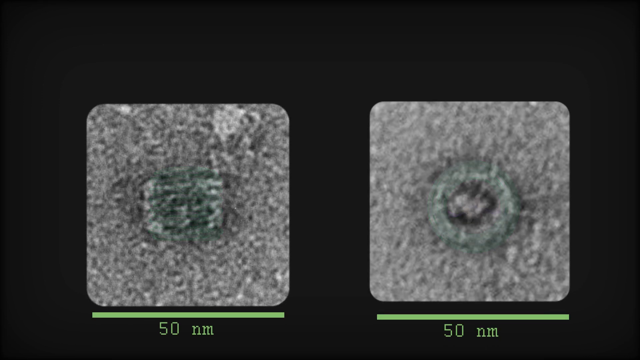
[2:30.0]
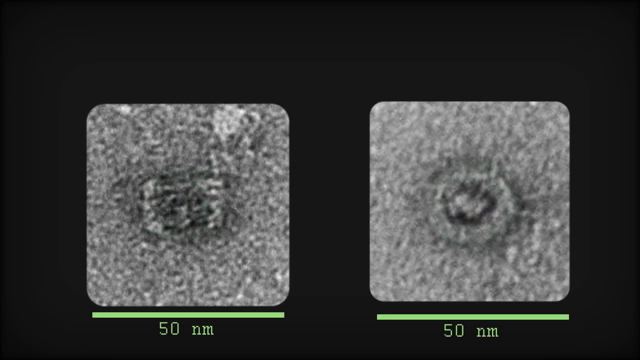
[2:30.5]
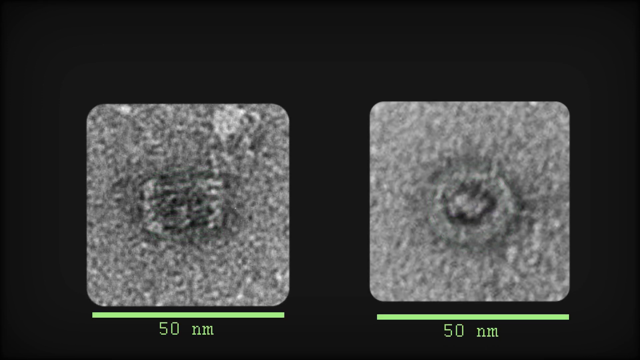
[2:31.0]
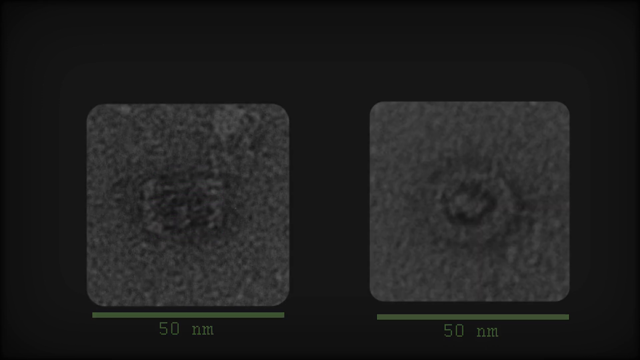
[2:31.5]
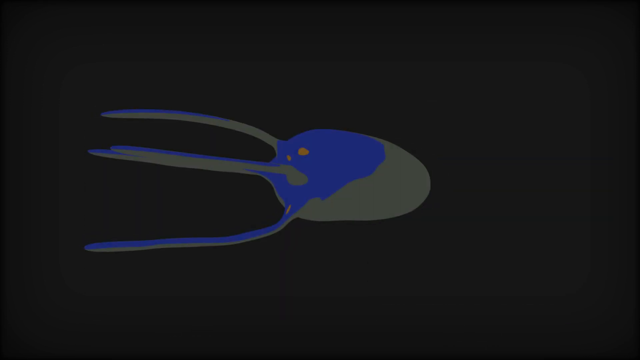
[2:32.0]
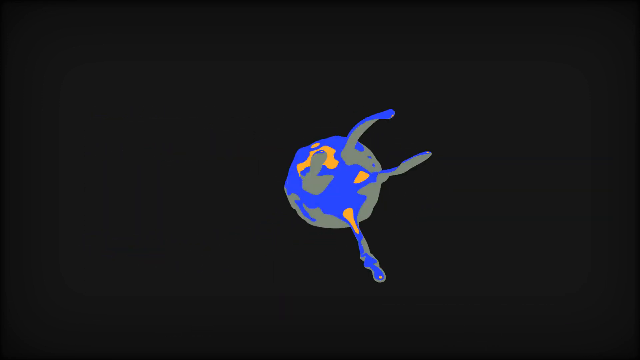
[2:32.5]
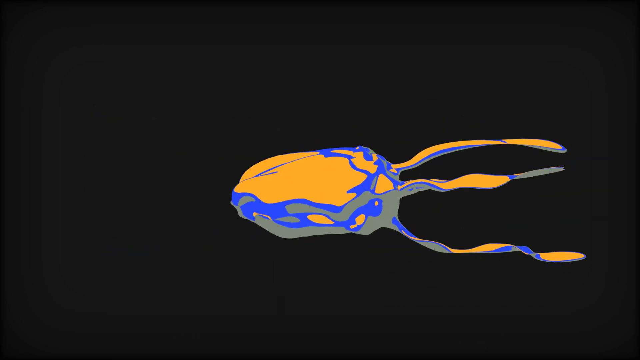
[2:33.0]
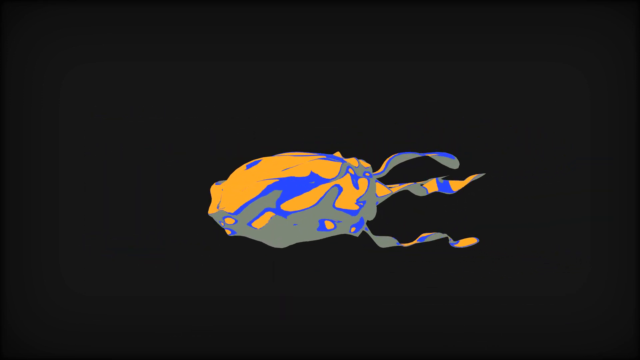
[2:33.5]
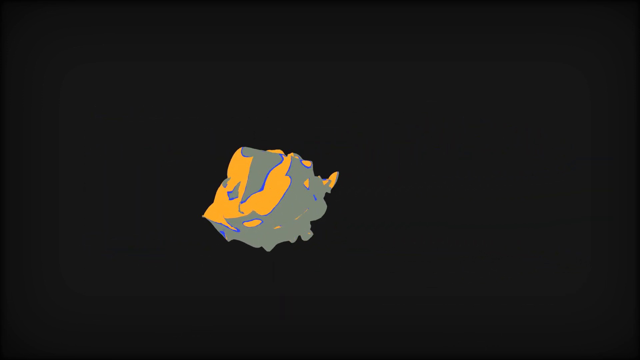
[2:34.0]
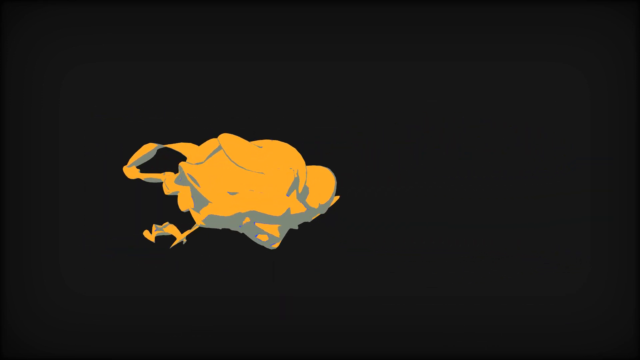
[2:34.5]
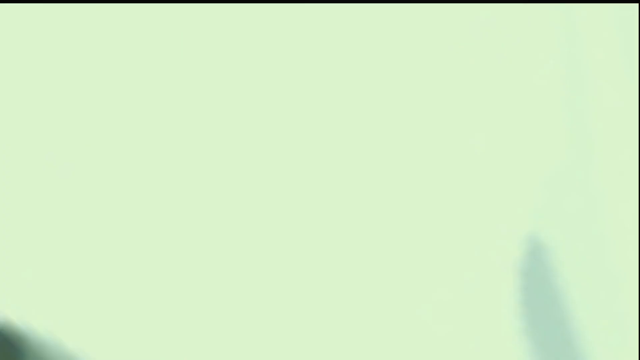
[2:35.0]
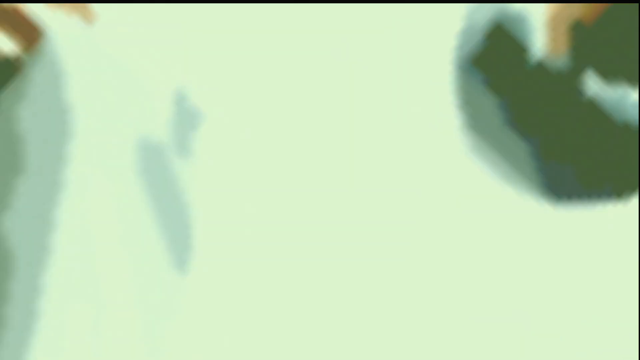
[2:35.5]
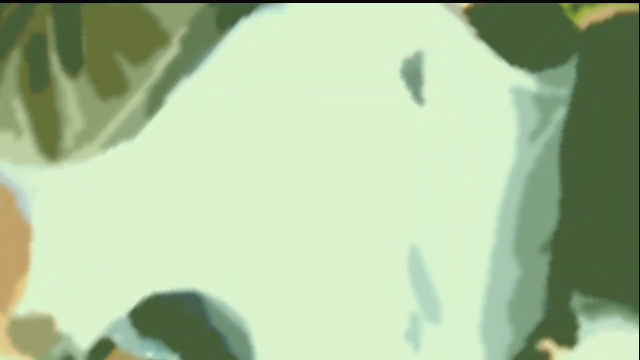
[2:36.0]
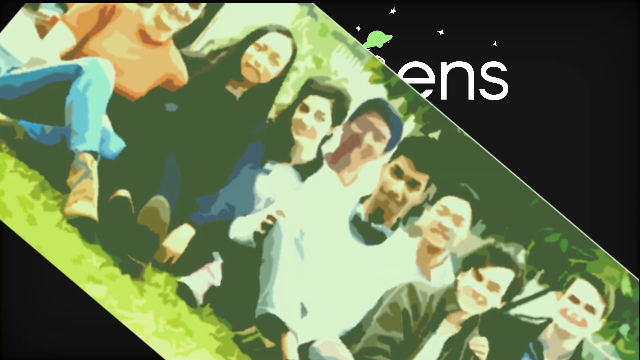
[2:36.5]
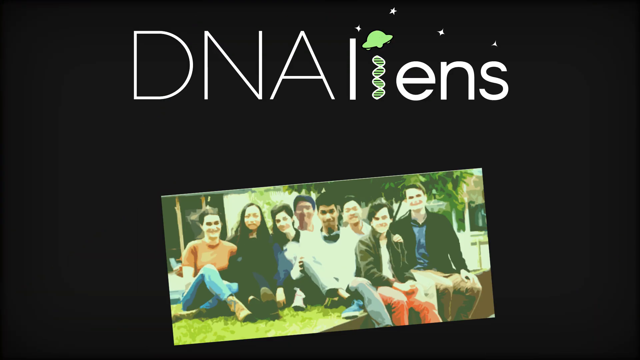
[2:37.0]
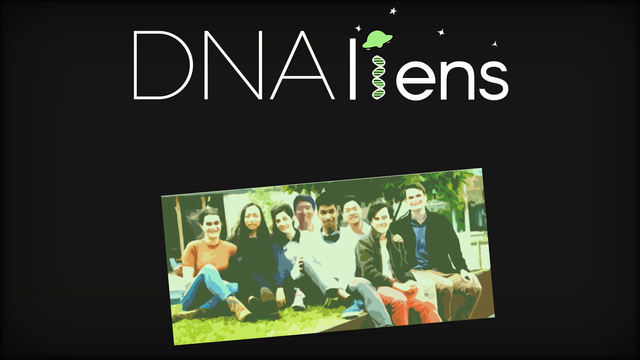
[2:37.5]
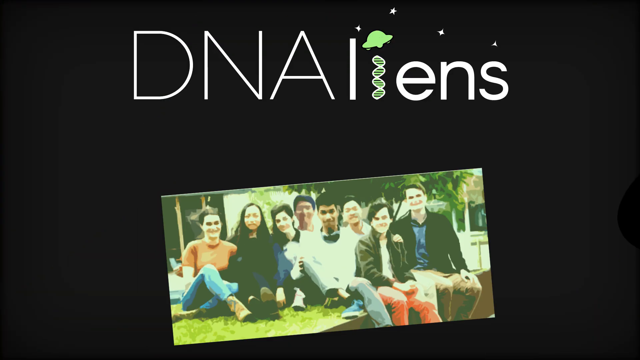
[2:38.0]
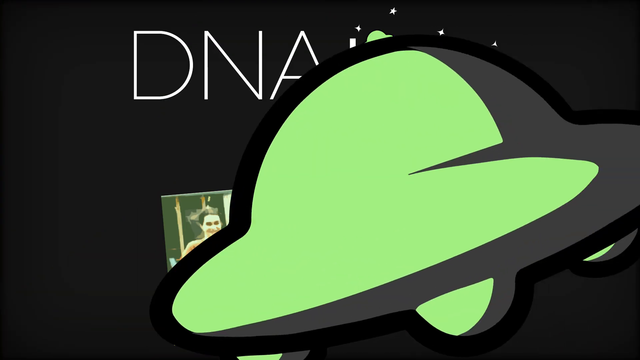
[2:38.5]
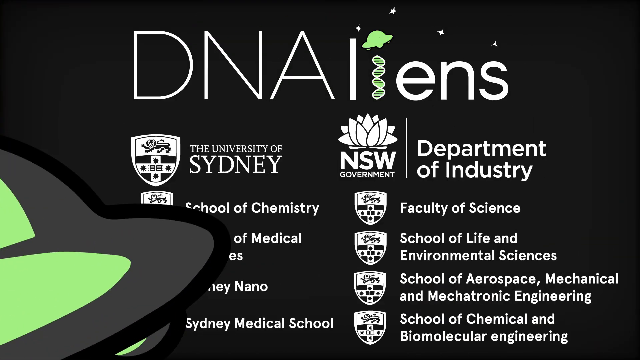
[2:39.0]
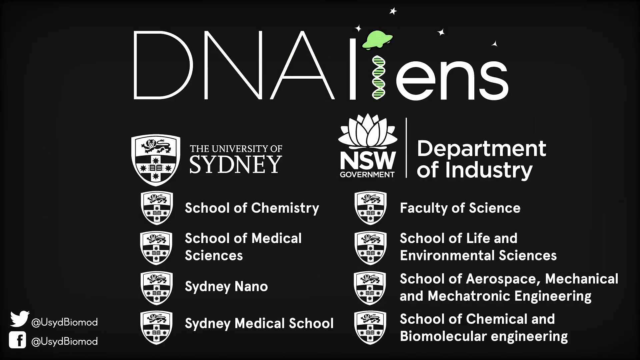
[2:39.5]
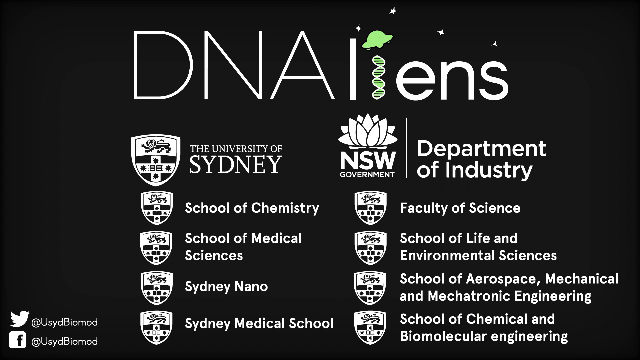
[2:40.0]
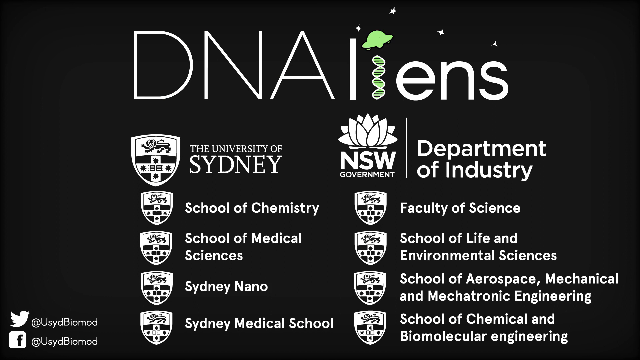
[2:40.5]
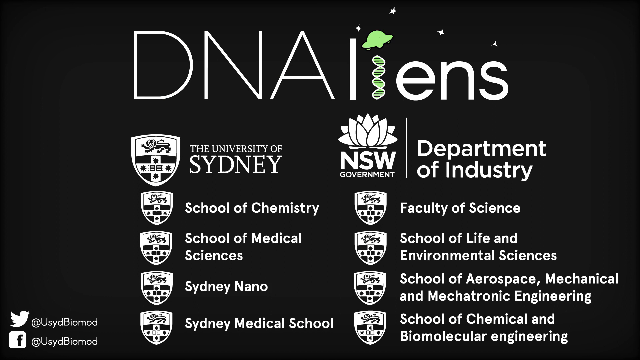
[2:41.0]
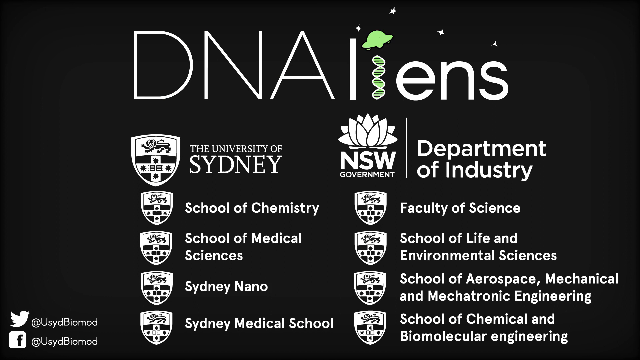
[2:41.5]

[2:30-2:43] The bacterium orbits horizontally and changes colors, becoming orangish, yellow and gray. The next cut is to a group picture of eight young people sitting on a bench or a fence, maybe connected to the DNA lens project. The flying saucer goes by. A list of credits in two columns appears, each with a logo next to it. On the left, under "DNA lens", it reads "the University of Sydney", "School of Chemistry", "School of Medical Sciences", "Sydney Nano", and something below that. On the right is an entry for a government or Department of Industry, followed by "Faculty of Science", "School of Life and Environmental Sciences", "School of Aerospace Mechanical and Mechatronic Engineering", "School of Chemical", and something else that cannot be made out.